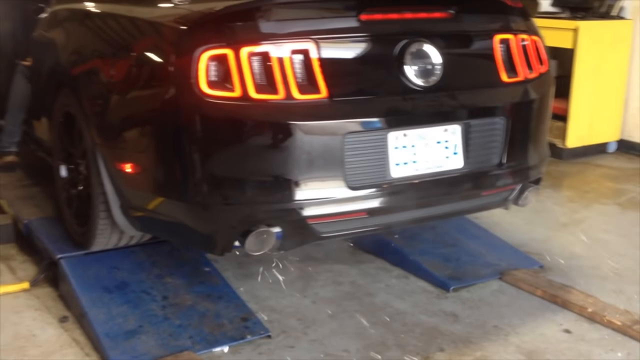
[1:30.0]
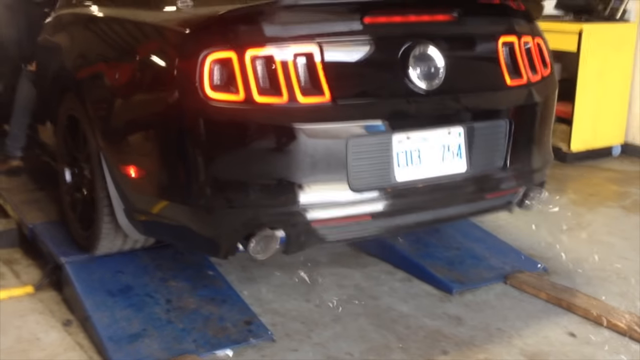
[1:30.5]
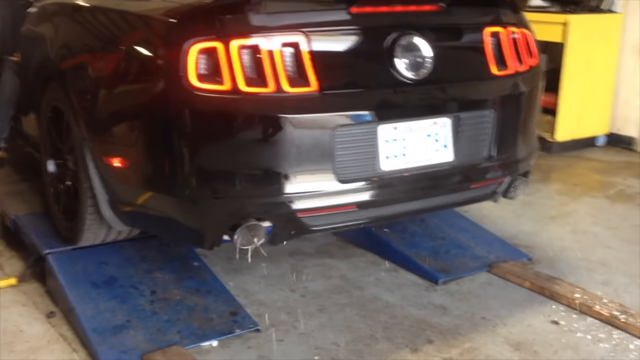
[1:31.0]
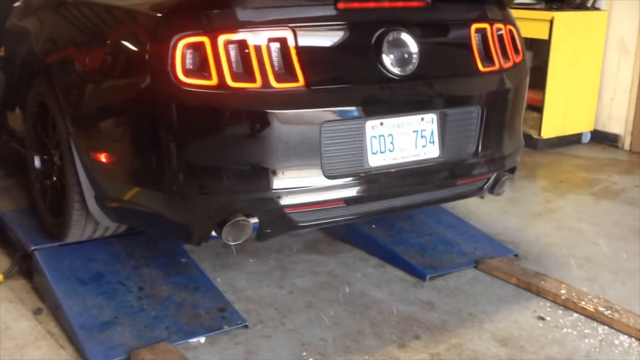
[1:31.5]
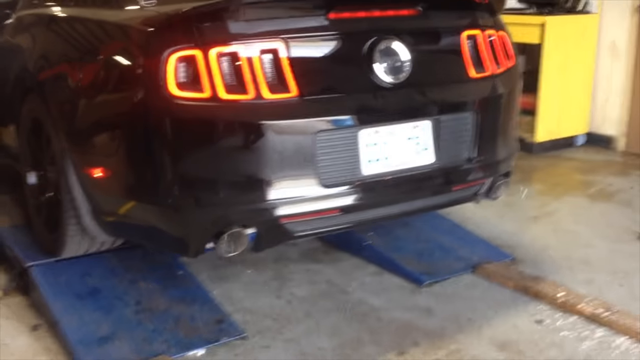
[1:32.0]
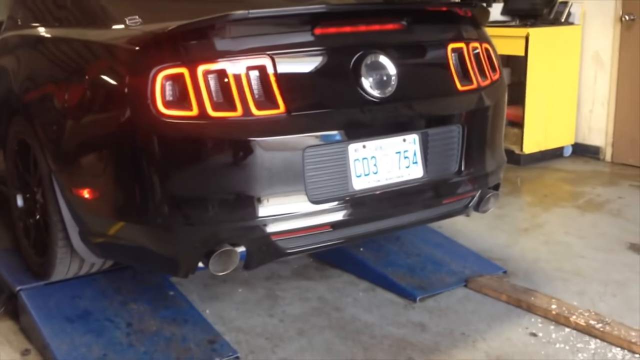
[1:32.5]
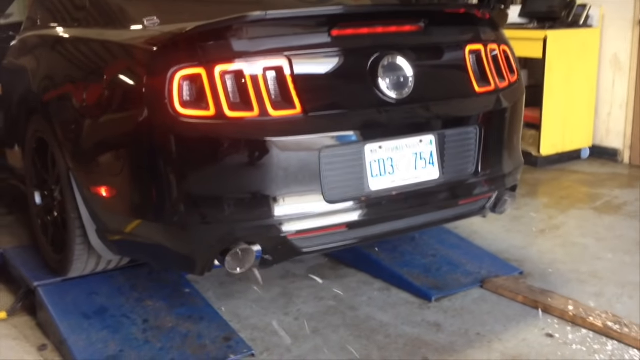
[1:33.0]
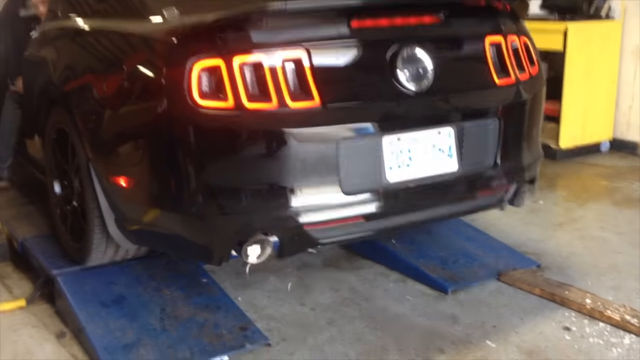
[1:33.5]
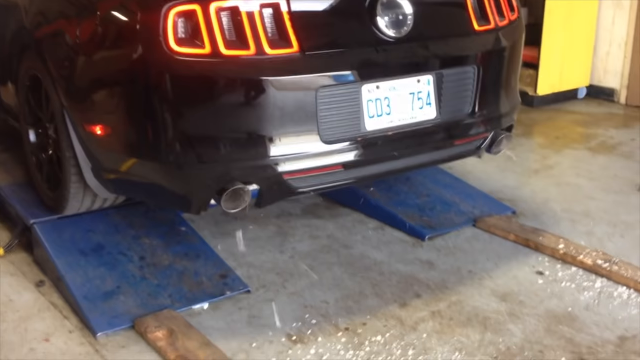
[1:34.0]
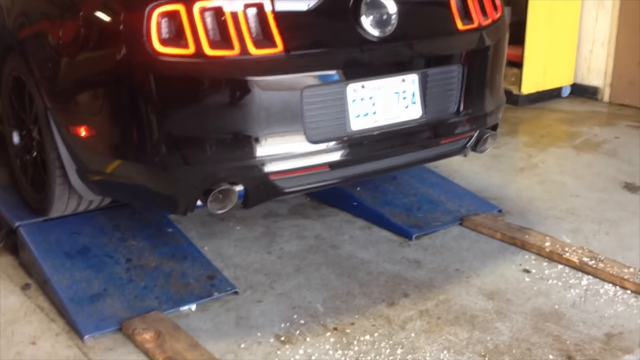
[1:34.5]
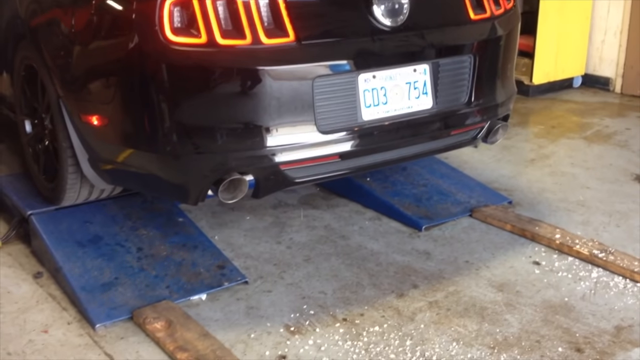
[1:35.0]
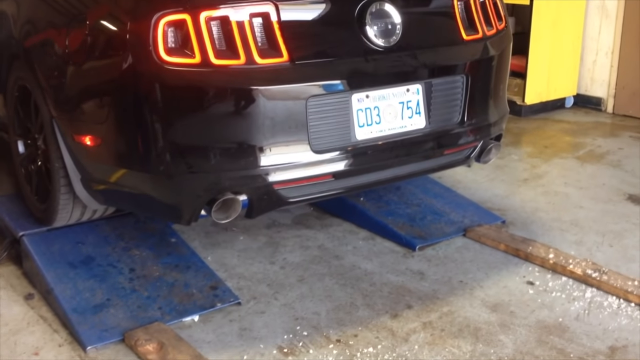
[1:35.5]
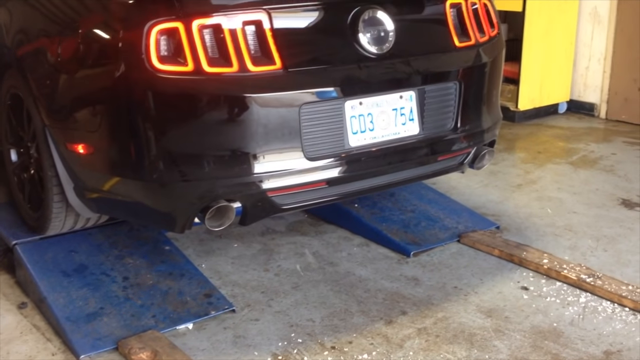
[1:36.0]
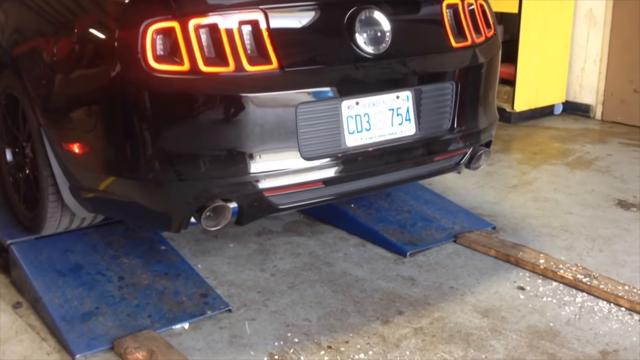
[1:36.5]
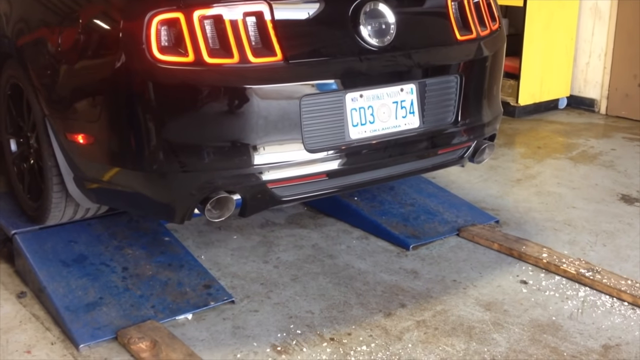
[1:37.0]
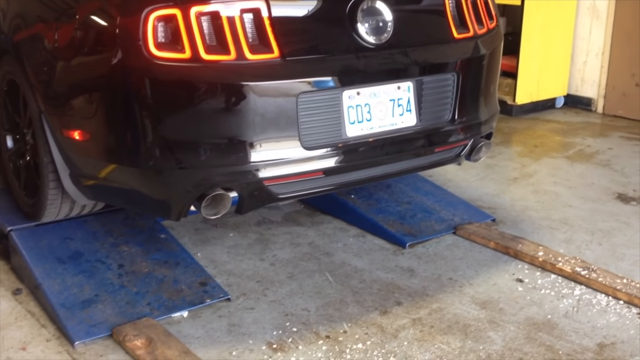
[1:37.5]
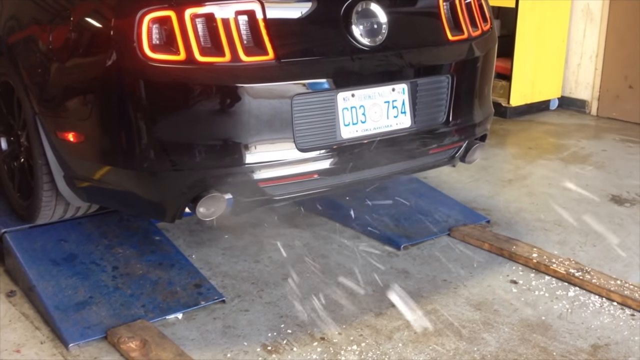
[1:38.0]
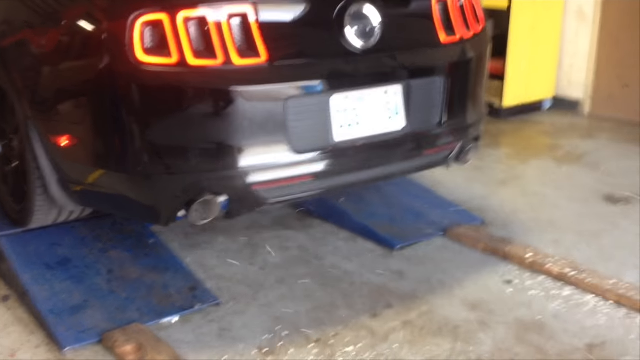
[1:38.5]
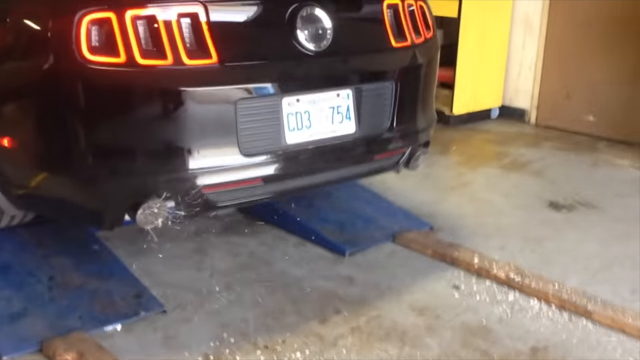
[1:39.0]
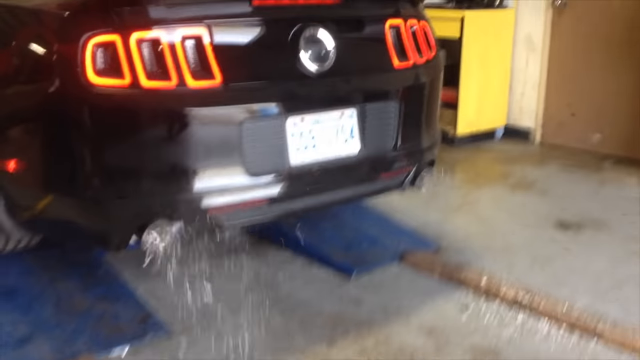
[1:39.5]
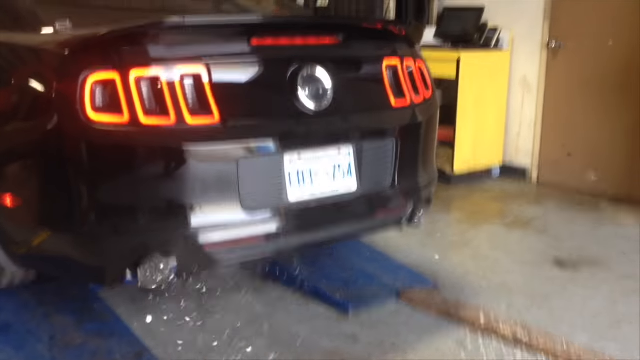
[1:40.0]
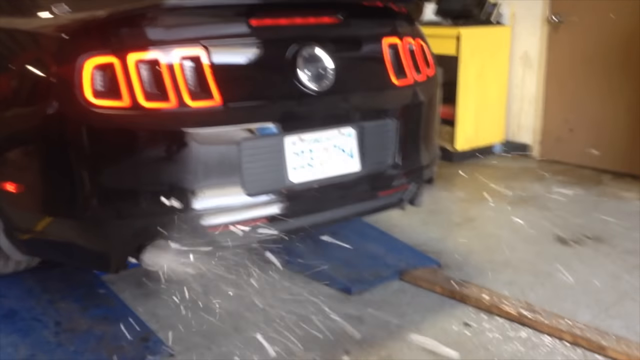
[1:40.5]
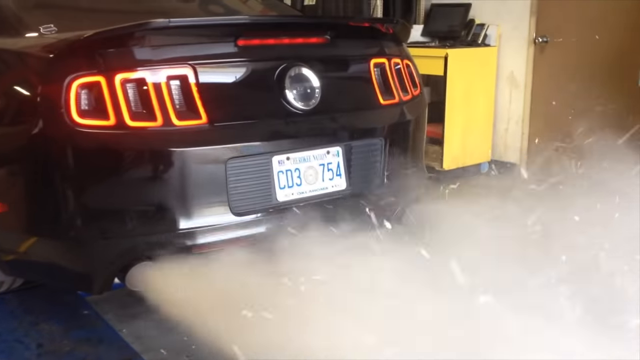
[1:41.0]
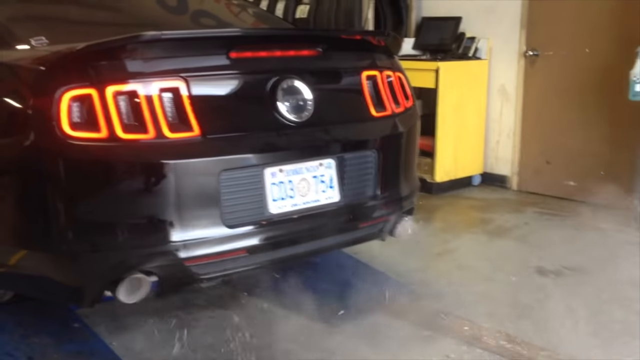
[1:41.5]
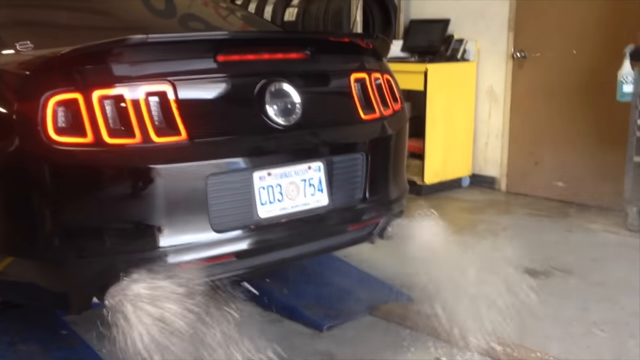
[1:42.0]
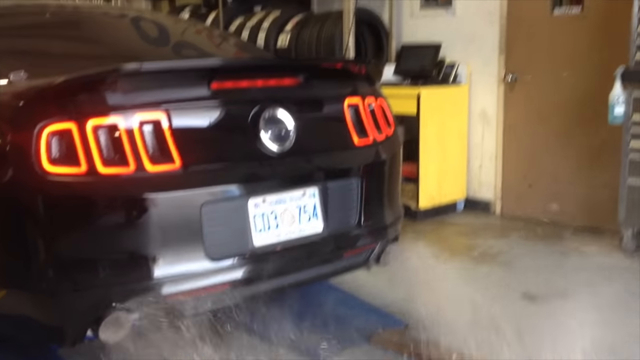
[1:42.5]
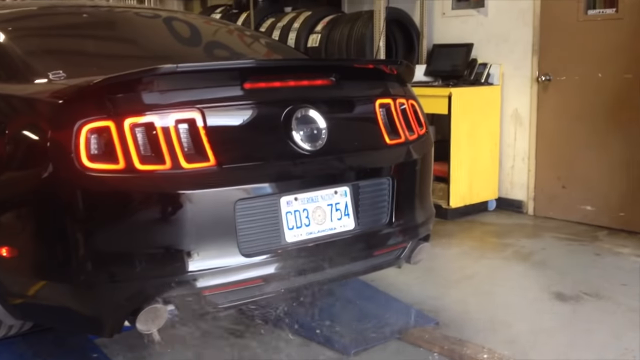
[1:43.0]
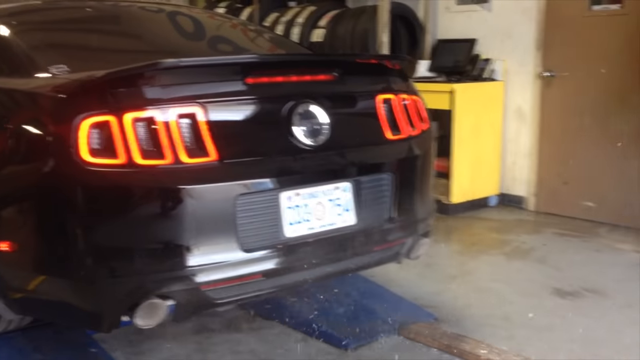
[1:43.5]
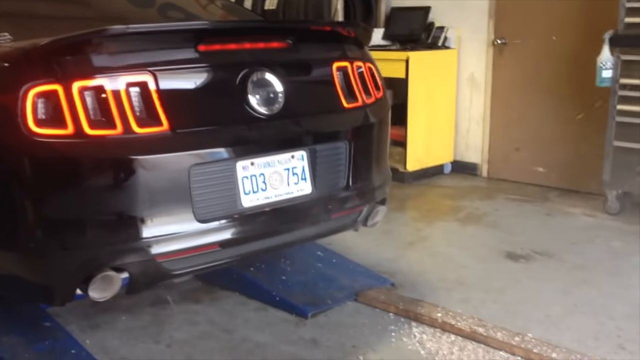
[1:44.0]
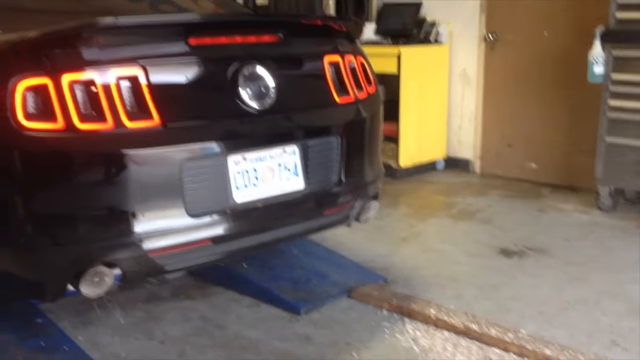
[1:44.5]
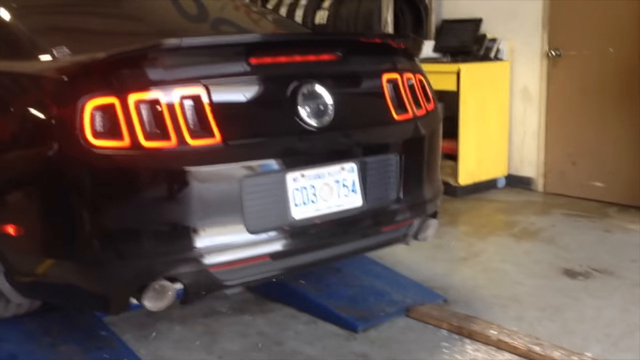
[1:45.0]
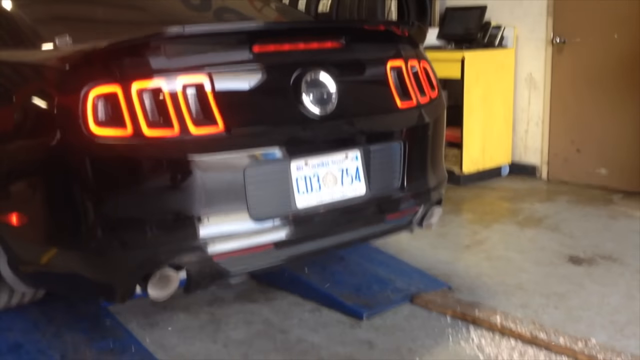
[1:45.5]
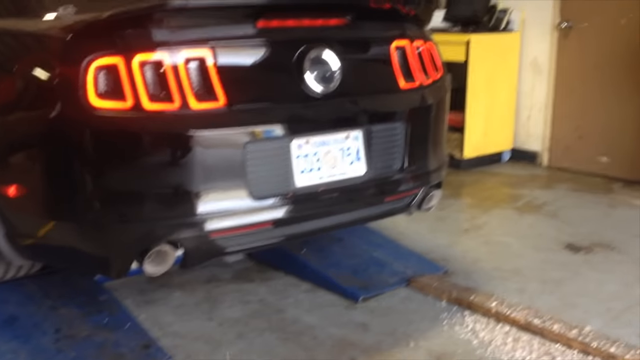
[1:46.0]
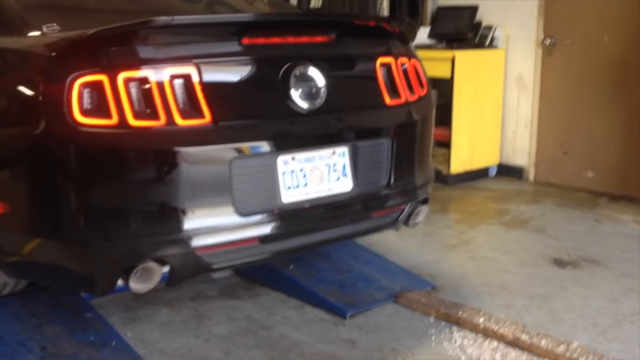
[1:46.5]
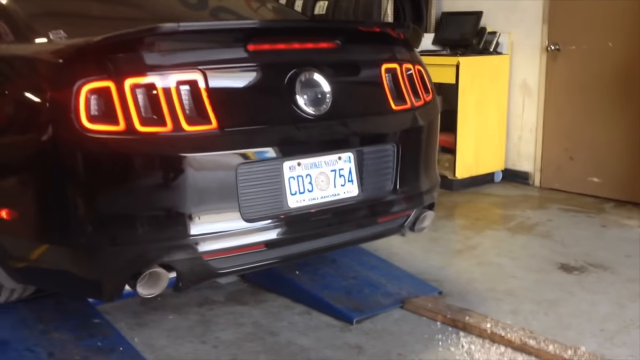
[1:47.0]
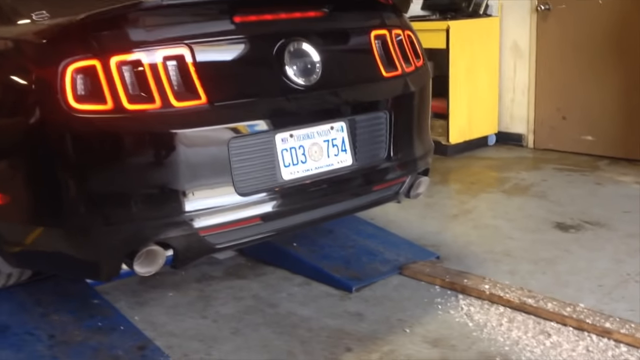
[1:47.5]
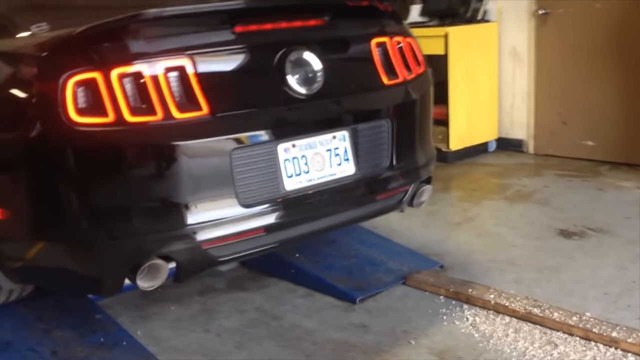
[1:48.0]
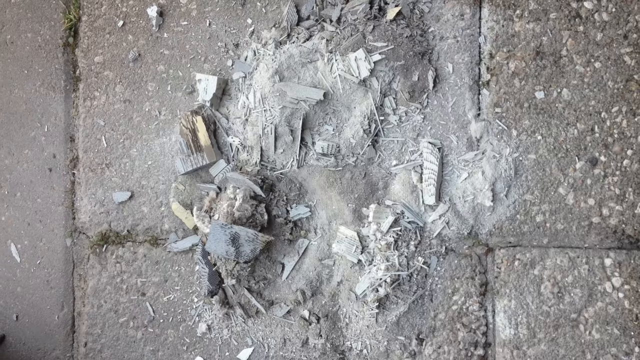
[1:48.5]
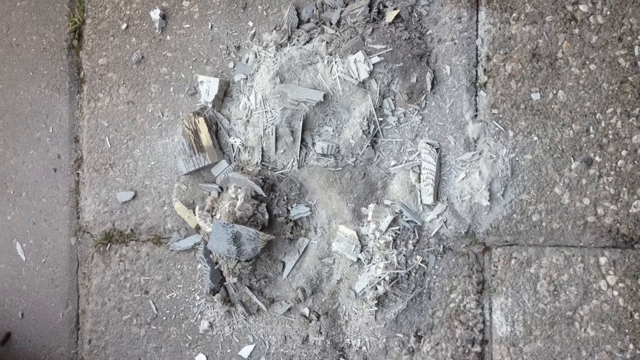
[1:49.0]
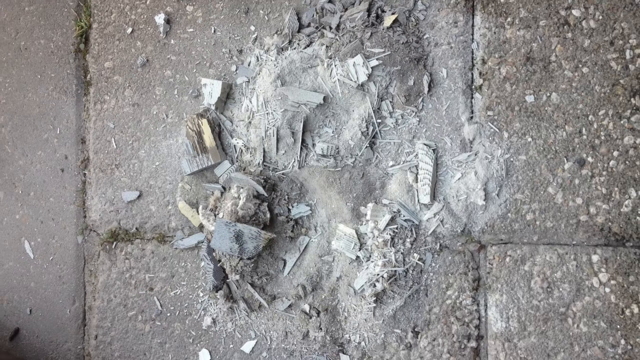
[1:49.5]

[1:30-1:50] A black Mustang in a garage, apparently recently worked on, starts its engine and a lot of exhaust comes out the left side of the car. Along with the exhaust, many bits and pieces that almost look like ripped paper shoot out like popcorn and fly through the air. At one point someone apparently steps on the accelerator, and the pieces fly out more densely. Behind the car is interlocking brick, where a pile of the debris has landed and accumulated on the sidewalk behind the garage. The garage is a repair garage with tools and toolboxes. The black Mustang, a newer model, is on blue ramps and looks like it is about to back up off them.